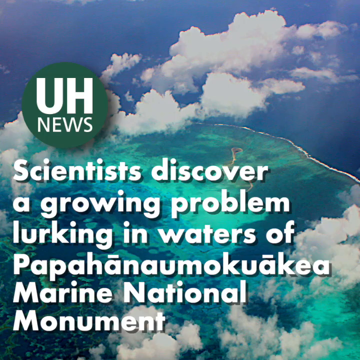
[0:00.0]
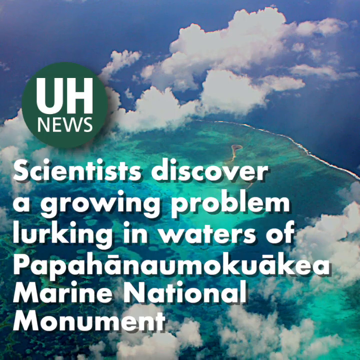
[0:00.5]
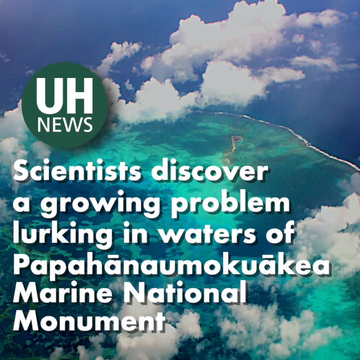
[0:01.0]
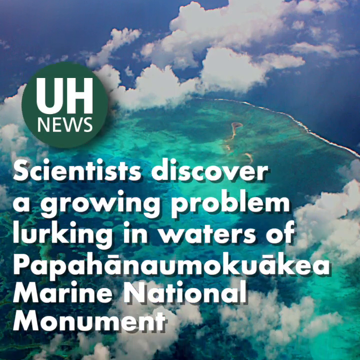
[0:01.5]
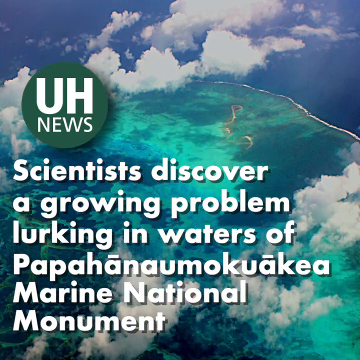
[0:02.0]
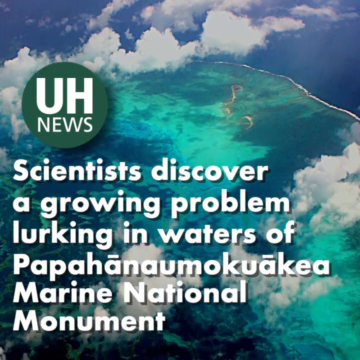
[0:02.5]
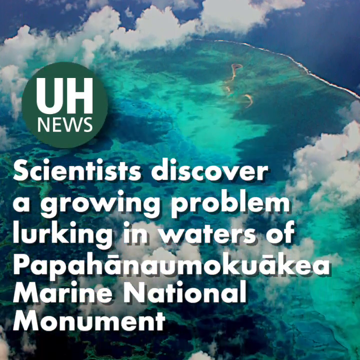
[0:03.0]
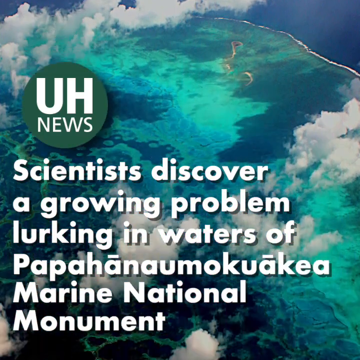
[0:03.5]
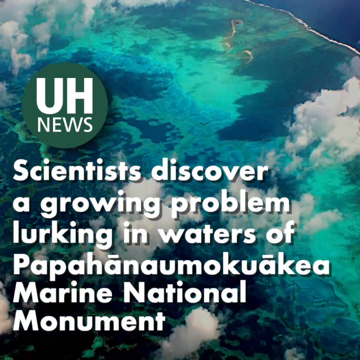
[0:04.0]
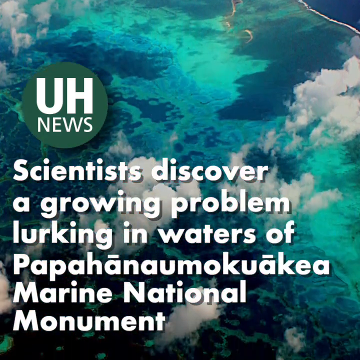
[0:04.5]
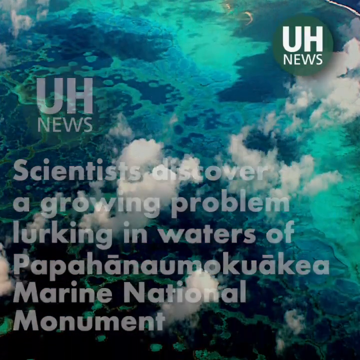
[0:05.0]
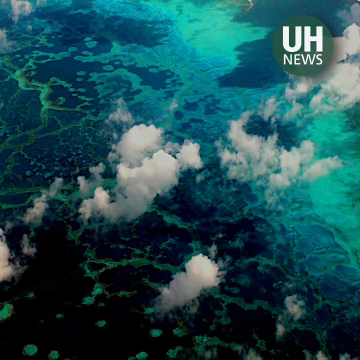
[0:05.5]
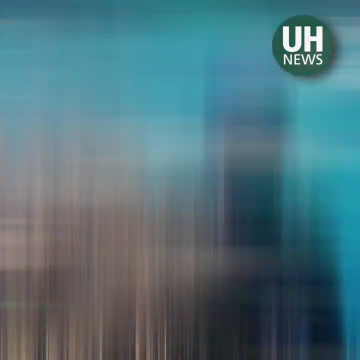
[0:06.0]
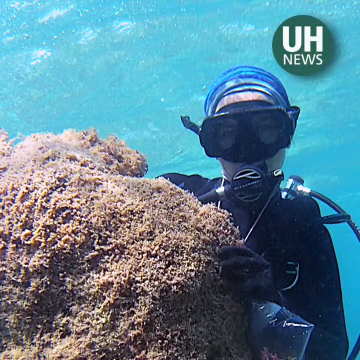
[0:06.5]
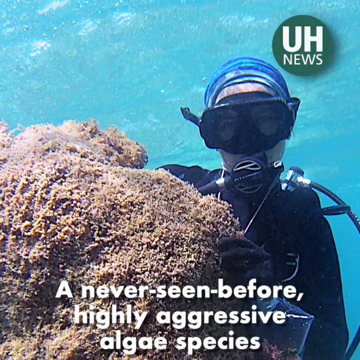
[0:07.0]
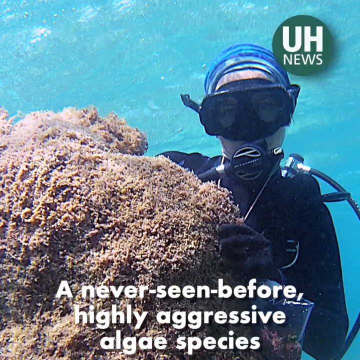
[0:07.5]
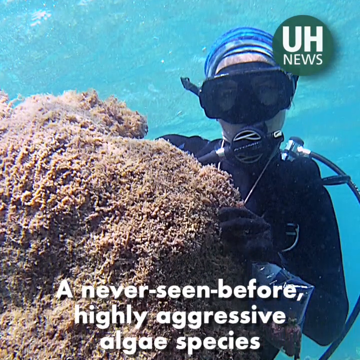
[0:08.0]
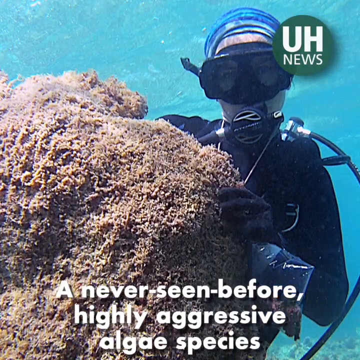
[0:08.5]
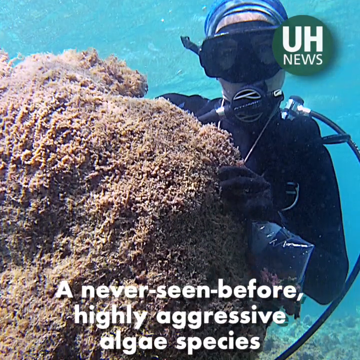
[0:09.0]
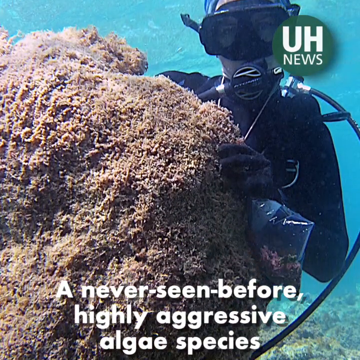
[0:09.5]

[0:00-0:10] The video, from UH News, opens with an aerial shot looking down at the ocean, with some white fluffy clouds lower than the camera. The footage has a 4:3 aspect ratio, squarer than modern TV. On the left-hand side of the frame, about a third of the way down, is a circular logo: a green circle with "UH News" written on it in white. Text underneath covers the bottom half of the screen and reads "scientists discover a growing problem lurking in waters of Papahanaumokuakea Marine National Monument." The camera tilts downwards to show more of the sea. It then cuts to a photograph of an underwater diver wearing a mask and a scuba suit and using an oxygen tank, just behind a large piece of coral. The UH News circle logo is now in the top right-hand corner of the frame. As the camera starts to tilt downwards on the photo, a caption at the bottom reads "a never seen before highly aggressive algae species."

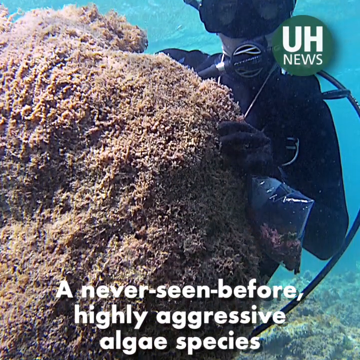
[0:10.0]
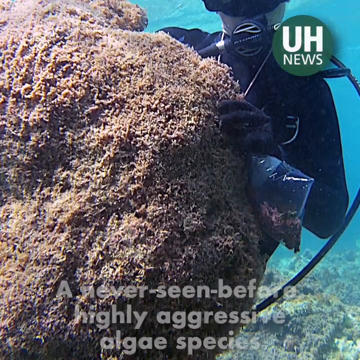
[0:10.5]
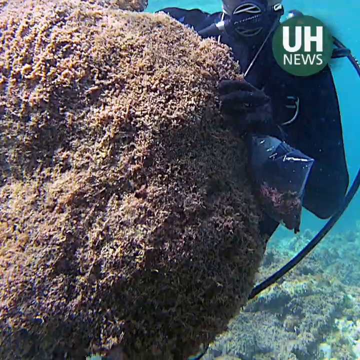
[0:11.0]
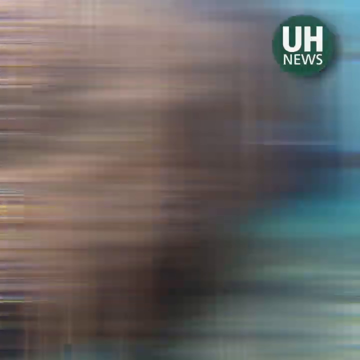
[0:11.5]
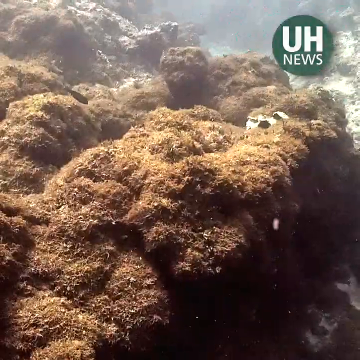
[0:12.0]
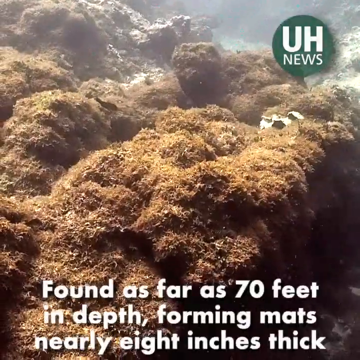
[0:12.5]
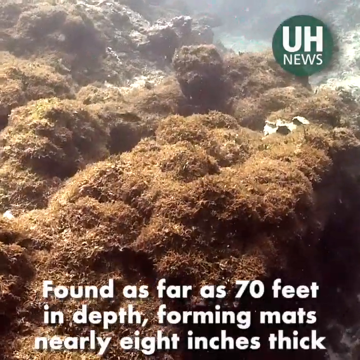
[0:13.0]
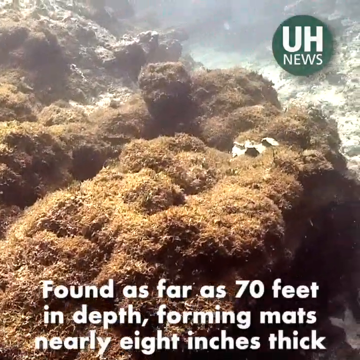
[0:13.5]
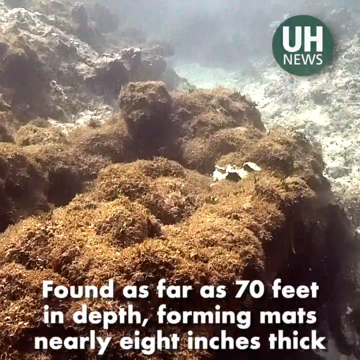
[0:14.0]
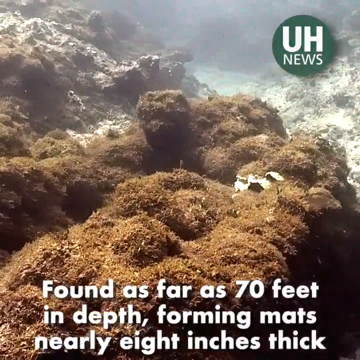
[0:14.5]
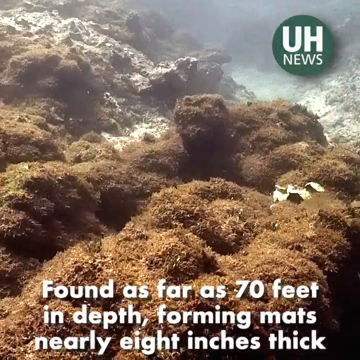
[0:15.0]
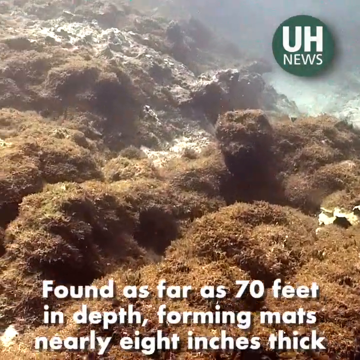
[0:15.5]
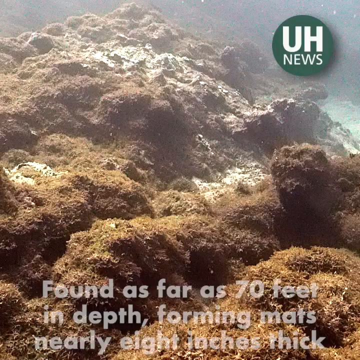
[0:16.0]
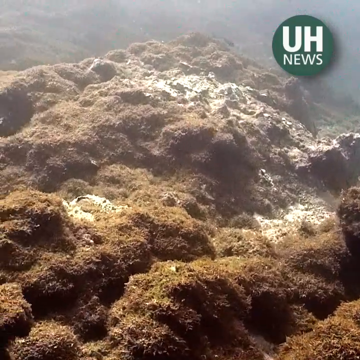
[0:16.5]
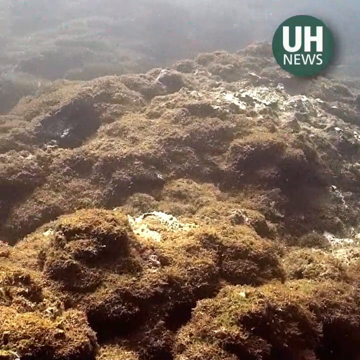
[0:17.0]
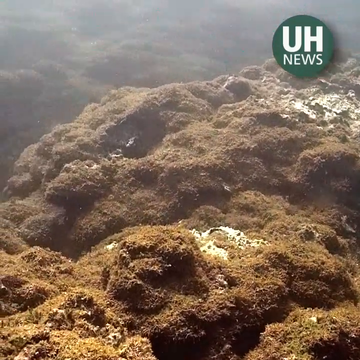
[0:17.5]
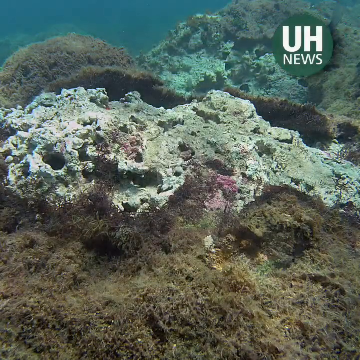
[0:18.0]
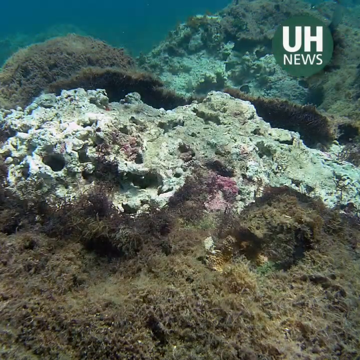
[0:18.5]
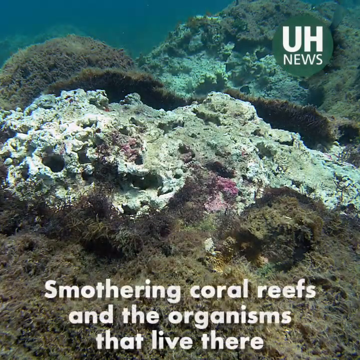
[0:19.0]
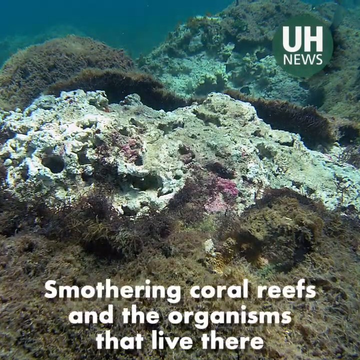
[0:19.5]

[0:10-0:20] The camera continues to tilt down until the ocean floor is visible, then cuts to footage of rocks or coral covered in the same brown algae. The shot is filmed from slightly above the algae, presumably by someone swimming over it, and some small fish swim around. The caption at the bottom now reads "found as far as 70 feet in depth forming mats nearly 8 inches thick." The camera continues to move along the algae-covered rocks. It then cuts to a new, wider shot showing an even larger area of coral or rocks covered in algae on the seabed, with the caption "smothering coral reefs and the organisms that live there."